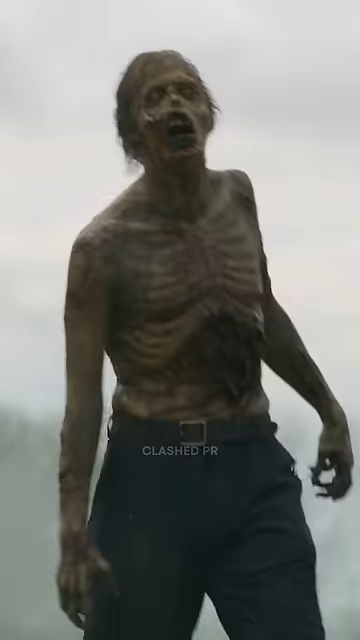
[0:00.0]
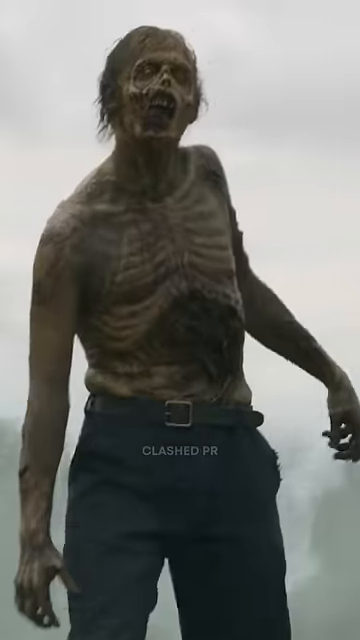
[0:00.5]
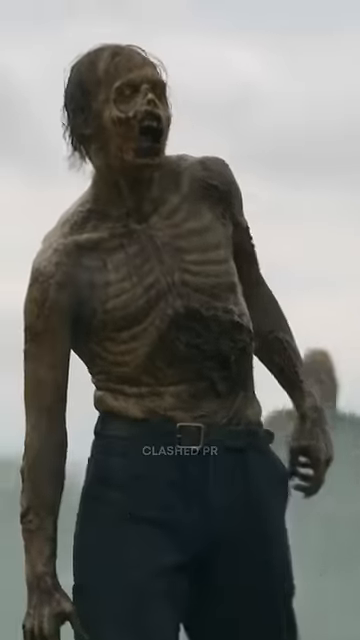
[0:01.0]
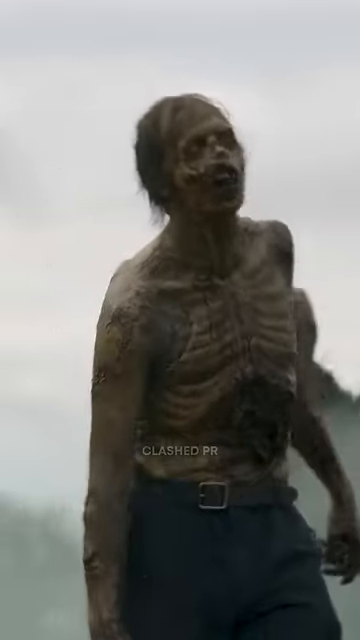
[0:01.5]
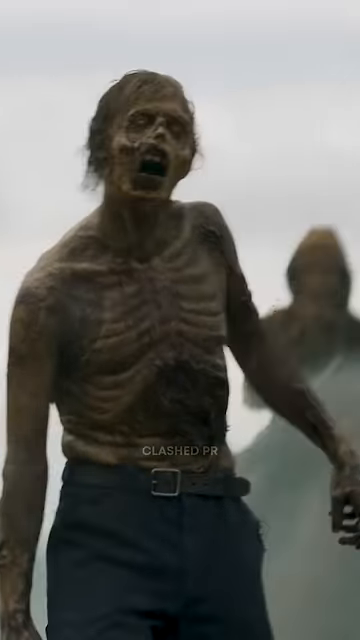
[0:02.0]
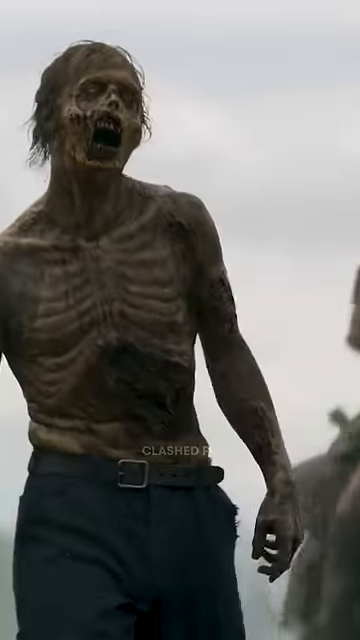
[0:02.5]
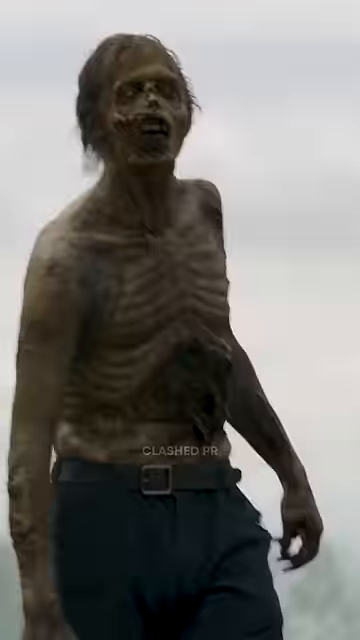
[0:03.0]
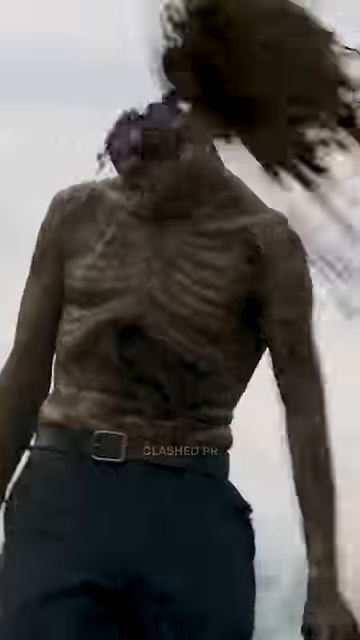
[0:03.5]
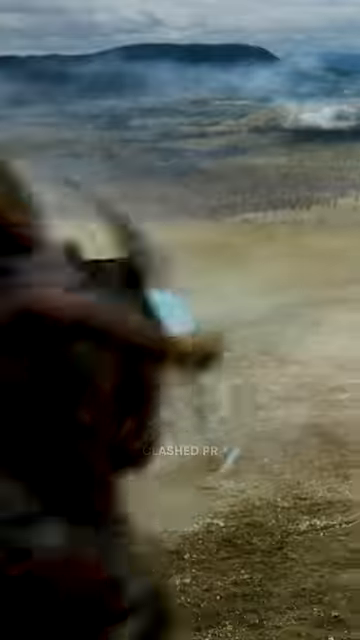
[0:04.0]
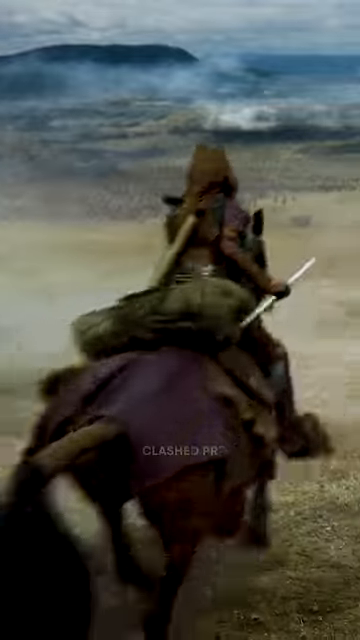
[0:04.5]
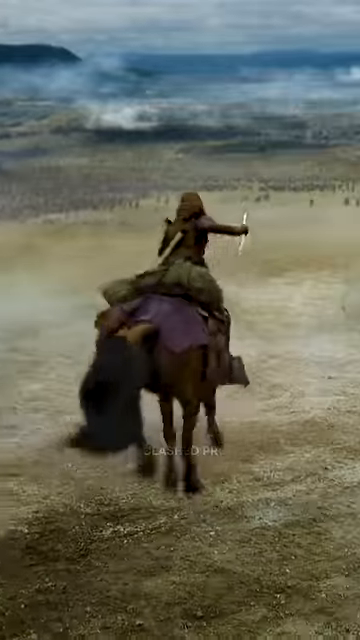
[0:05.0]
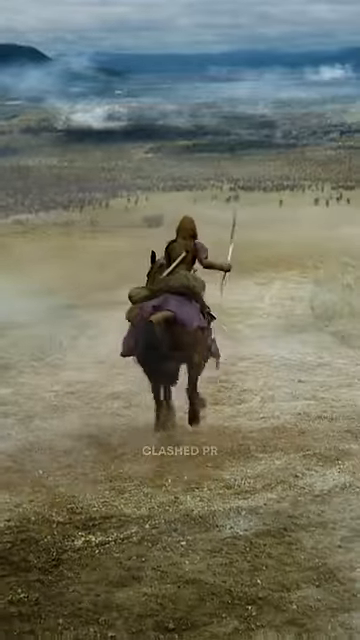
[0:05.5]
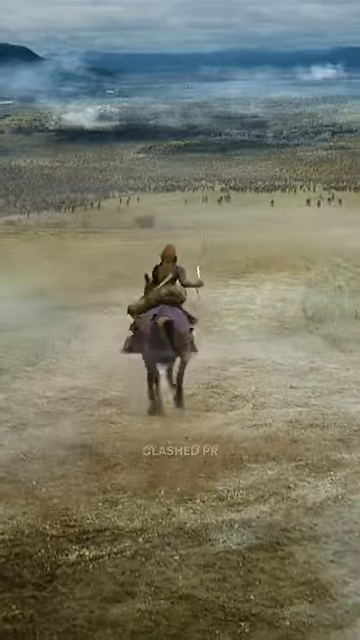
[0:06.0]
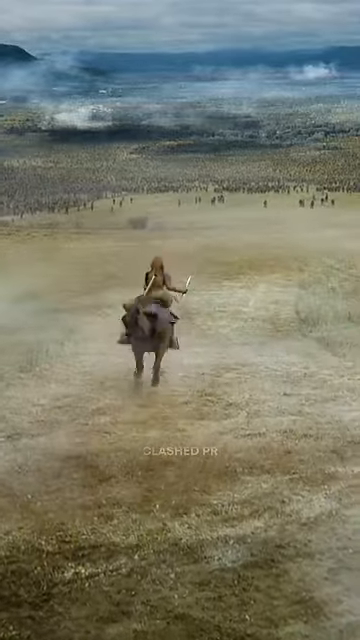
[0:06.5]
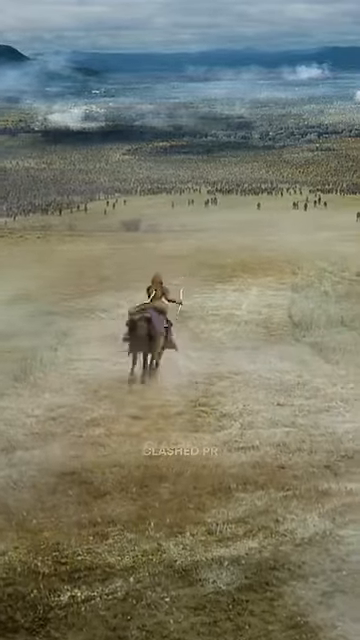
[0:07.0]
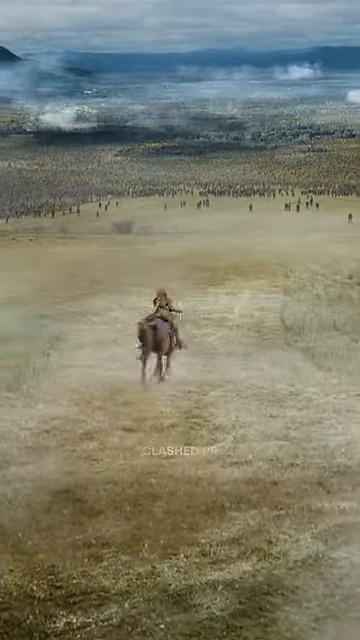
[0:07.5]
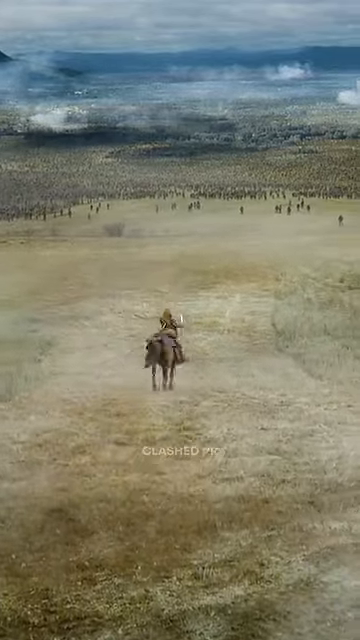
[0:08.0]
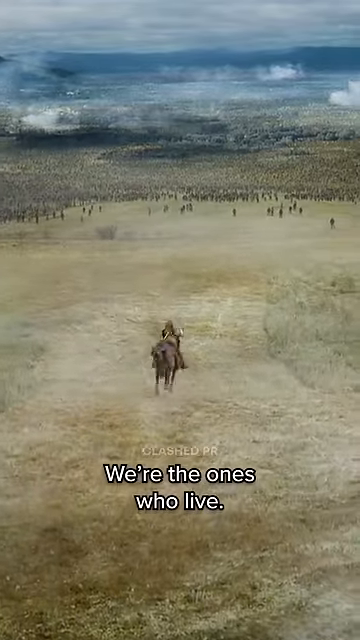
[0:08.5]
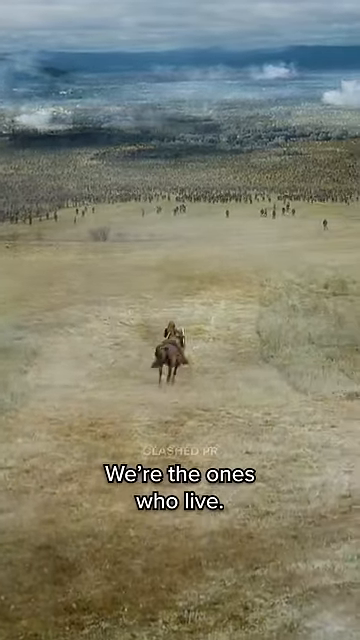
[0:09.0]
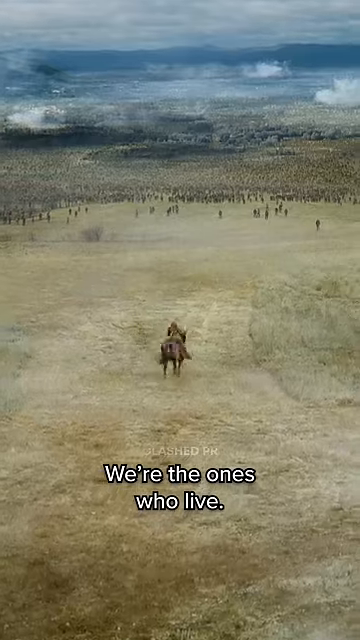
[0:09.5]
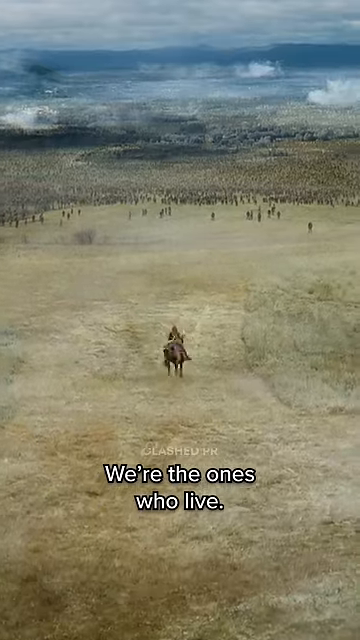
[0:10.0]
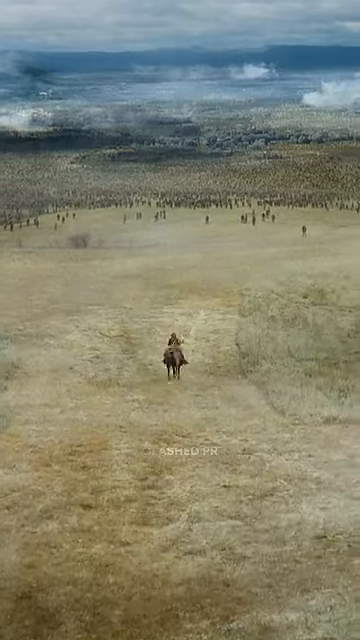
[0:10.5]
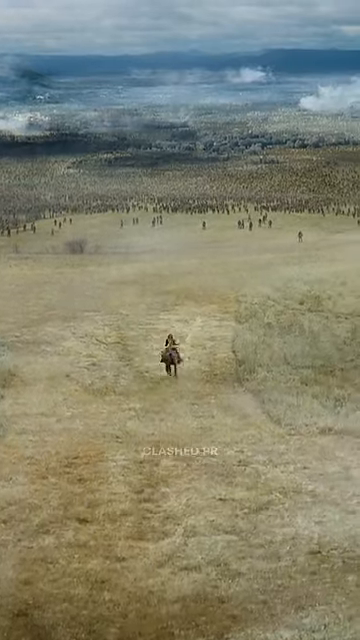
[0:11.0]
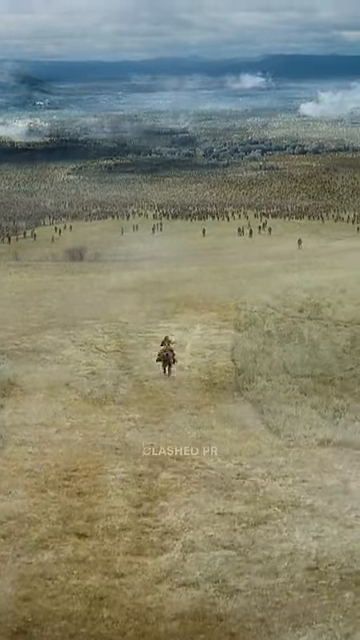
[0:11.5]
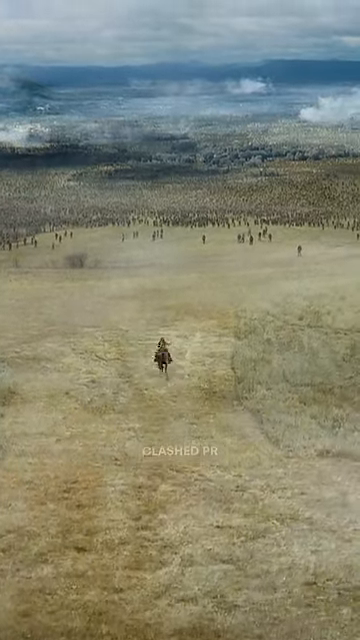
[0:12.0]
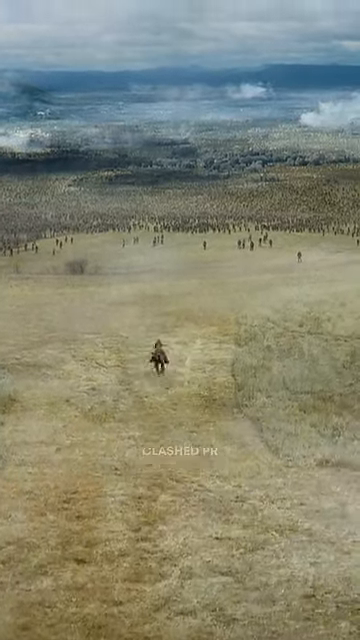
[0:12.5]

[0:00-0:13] A zombie walks toward the camera. Very small white or gray text reading "Clashed PR" is at the bottom center of the screen. The zombie is shirtless and wears dark pants that look to be either green or blue; his ribs are visible and he limps as he walks. Behind him, somebody rides a horse toward the camera but slightly to the right. A sword slashes the zombie's head off, and the head falls as the zombie's body tumbles a little. The shot then shows the back of the rider, a woman in purple: she wears a short-sleeved purple shirt and something brown on her head, and she has a large green bag. There is a purple blanket on the horse as it runs away, and the horse has a lot of black hair at the end of its tail. She heads toward many figures in the far distance that are likely zombies, since they don't appear to be moving much. The sky has many somewhat small dark clouds and is dark blue in the distance. White text comes up at the bottom of the screen reading "We're the ones who live." She rides the horse far into the distance.